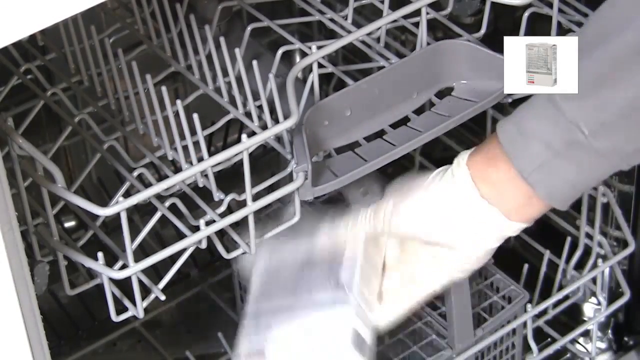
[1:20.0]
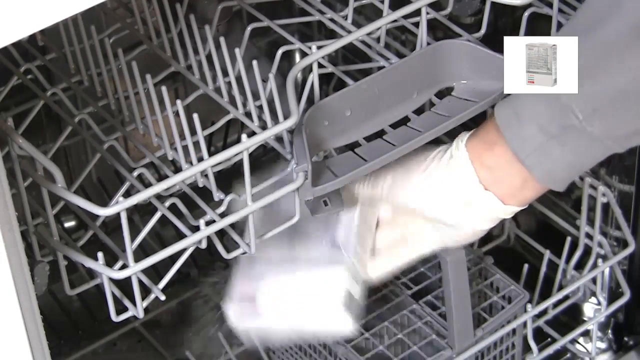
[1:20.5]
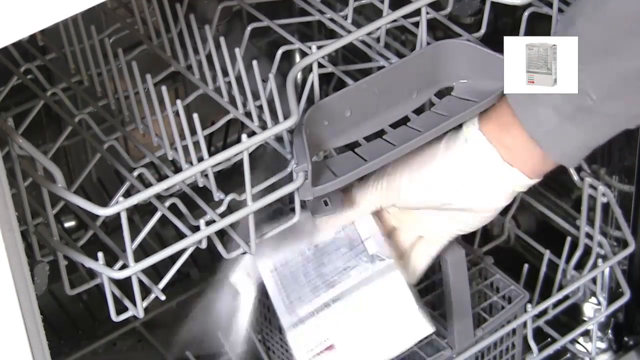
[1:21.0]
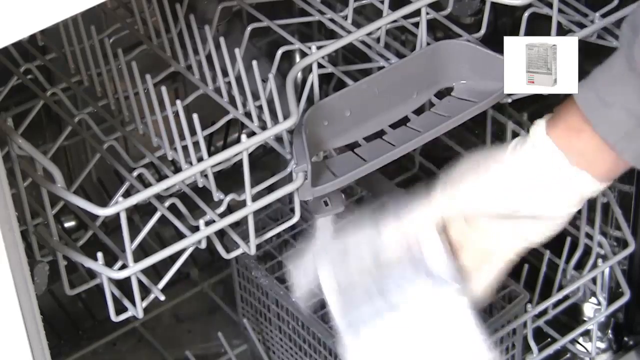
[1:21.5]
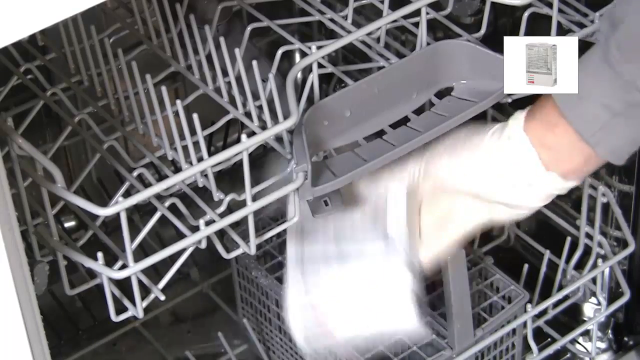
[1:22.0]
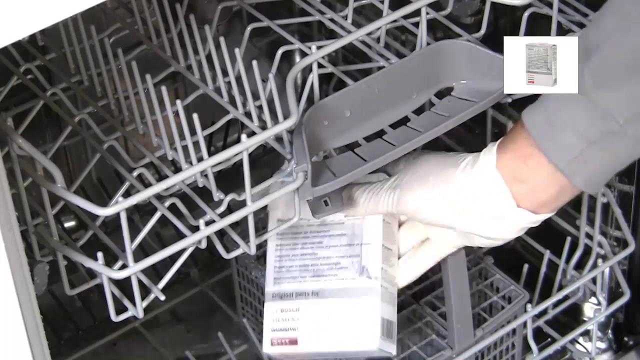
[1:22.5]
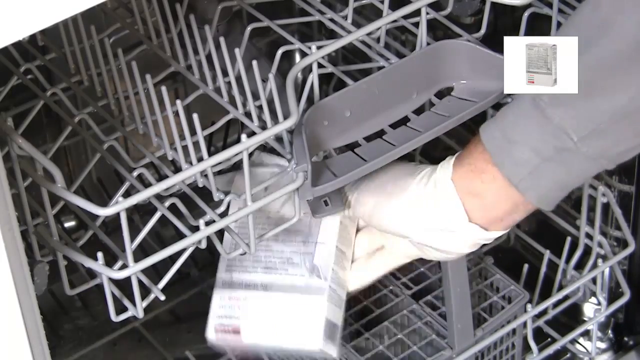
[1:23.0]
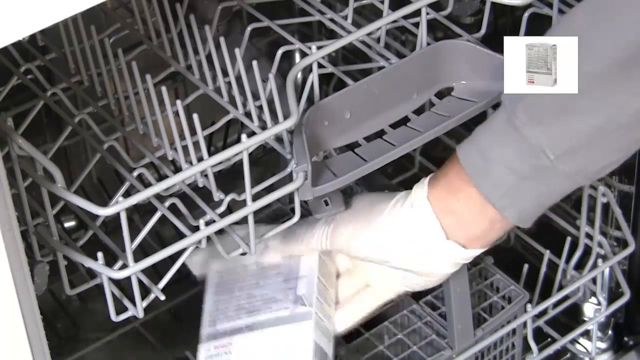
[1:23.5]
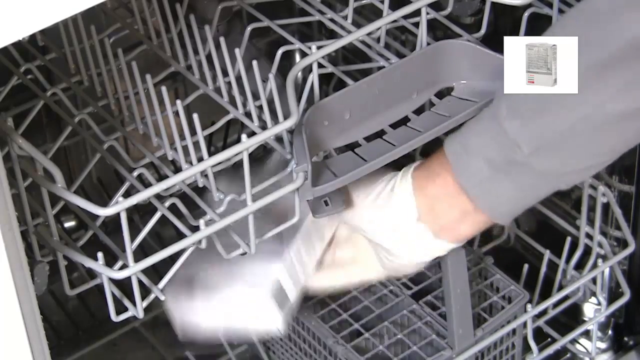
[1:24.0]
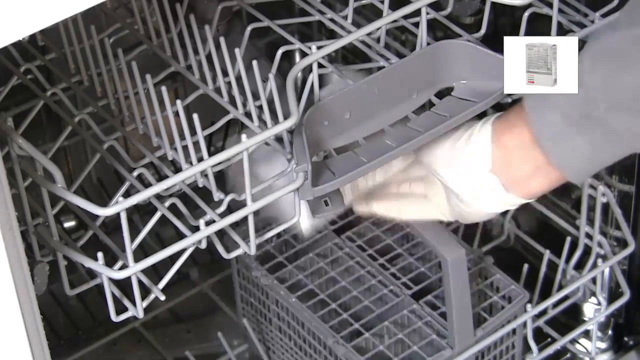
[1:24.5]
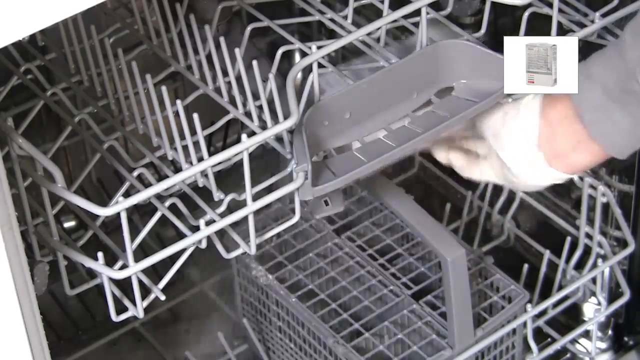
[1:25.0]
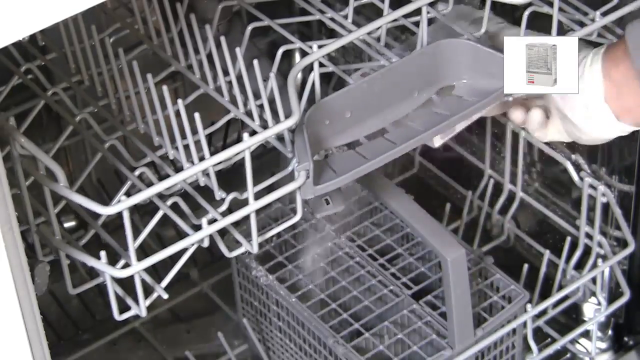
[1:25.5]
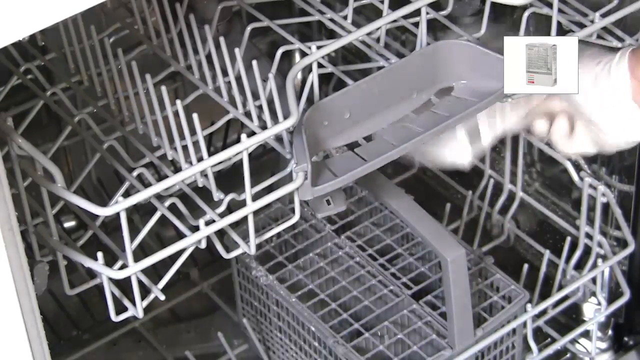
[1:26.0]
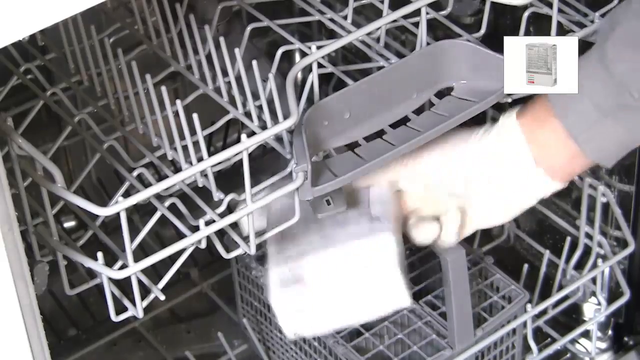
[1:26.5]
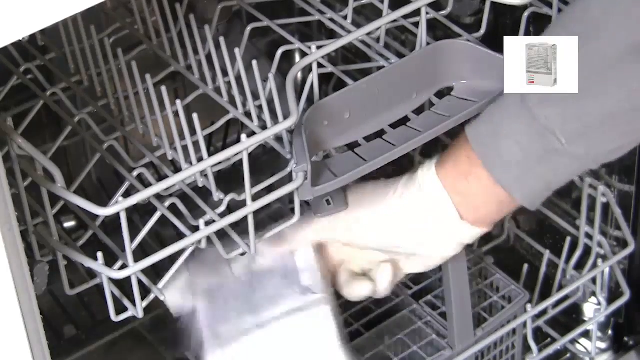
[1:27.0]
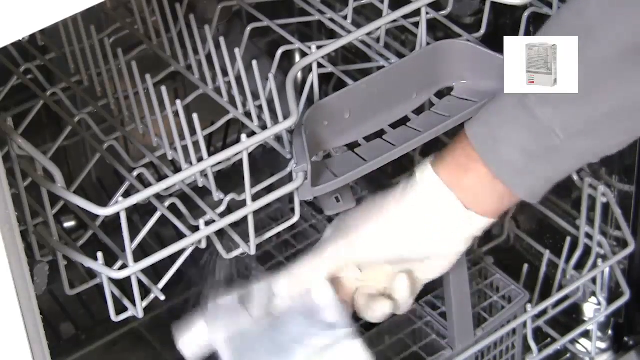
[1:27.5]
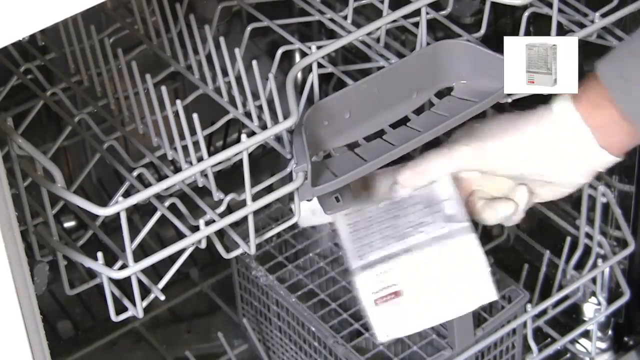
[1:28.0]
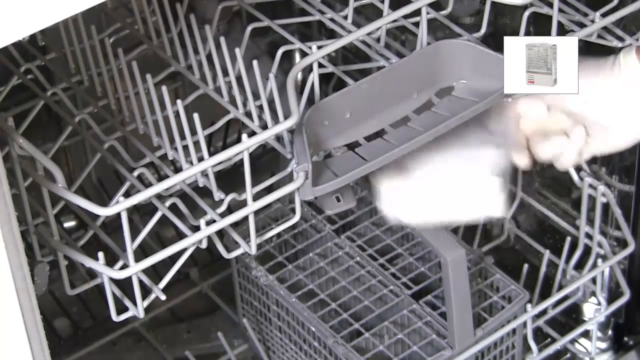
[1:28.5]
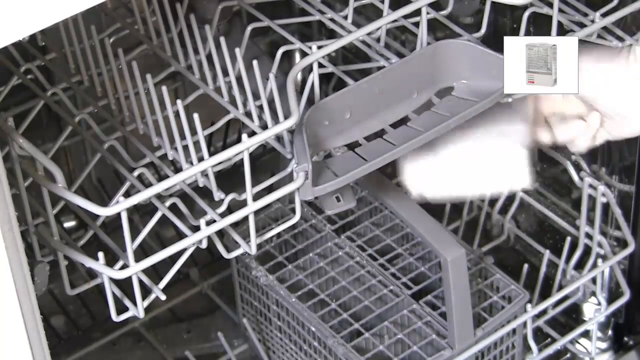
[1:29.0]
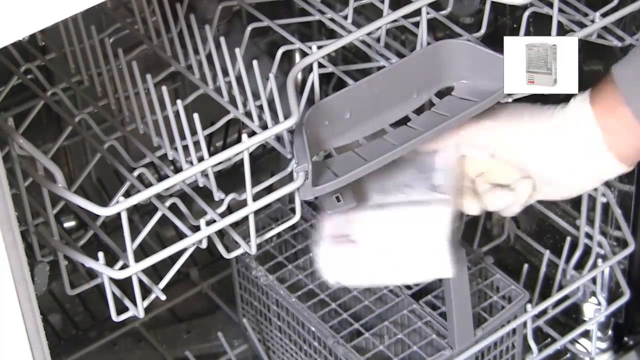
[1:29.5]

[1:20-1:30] The person shakes the contents of the box into the dishwasher, and the powder sprinkles everywhere inside, occasionally hitting the top rack, the bottom rack and the utensil basket. He spreads it all over the bottom so it falls inside the dishwasher, kind of emptying the whole box. There seems to be no organization or plan to the sprinkling; he just spreads it everywhere until the box is emptied.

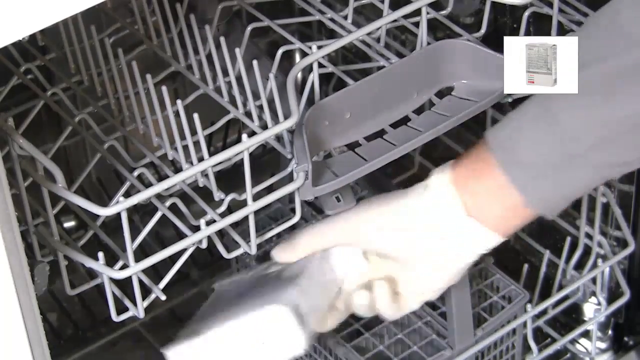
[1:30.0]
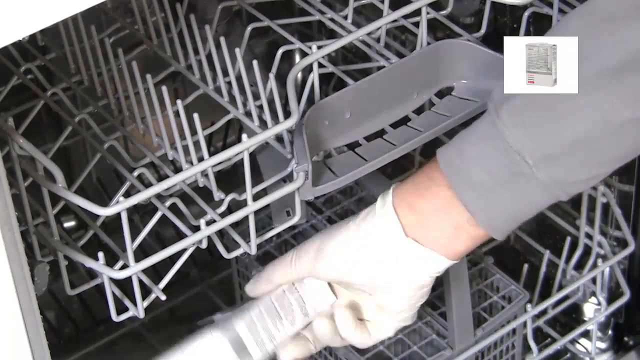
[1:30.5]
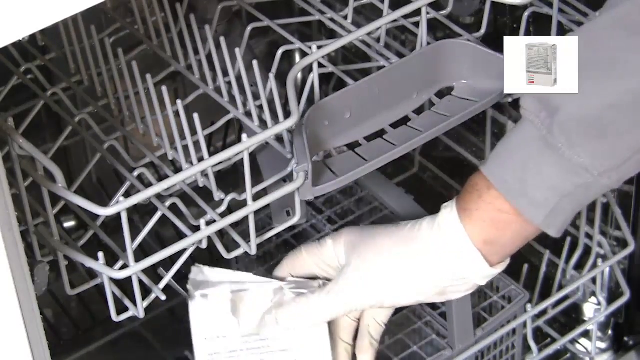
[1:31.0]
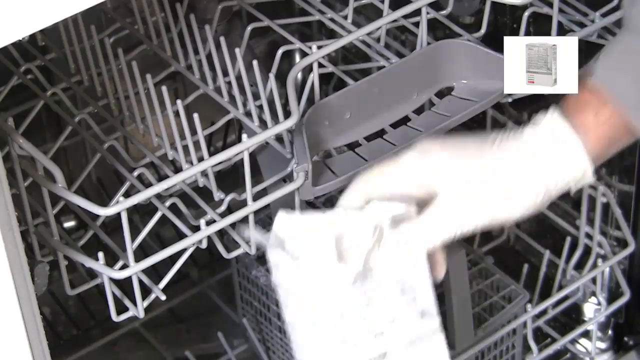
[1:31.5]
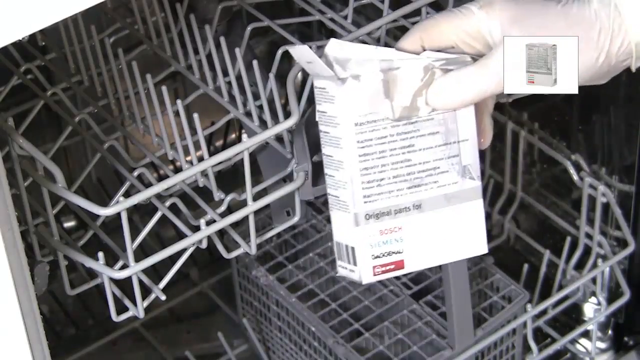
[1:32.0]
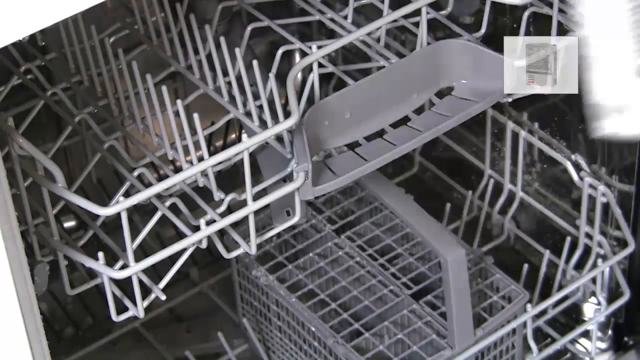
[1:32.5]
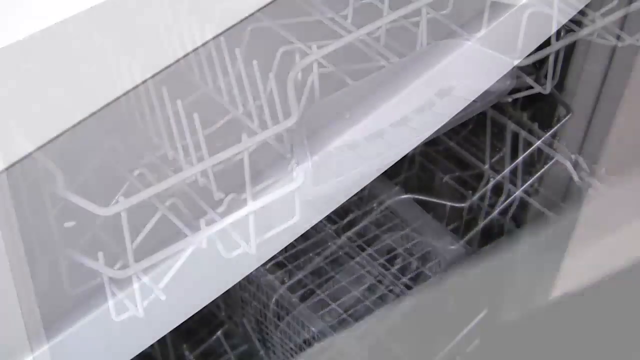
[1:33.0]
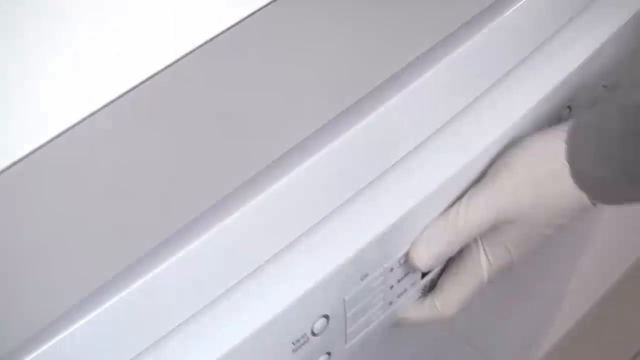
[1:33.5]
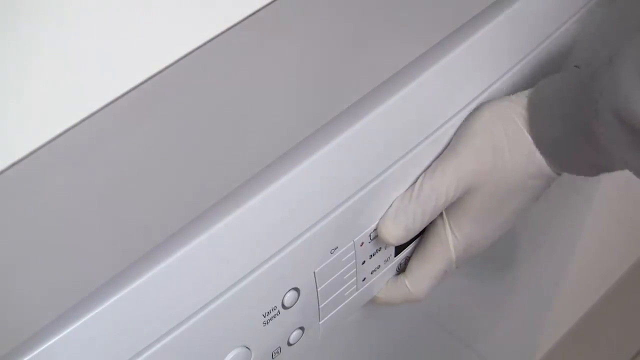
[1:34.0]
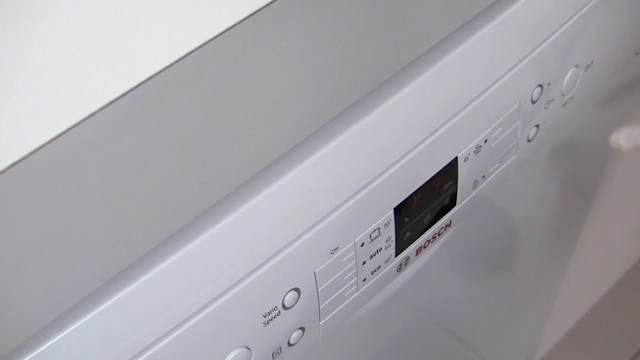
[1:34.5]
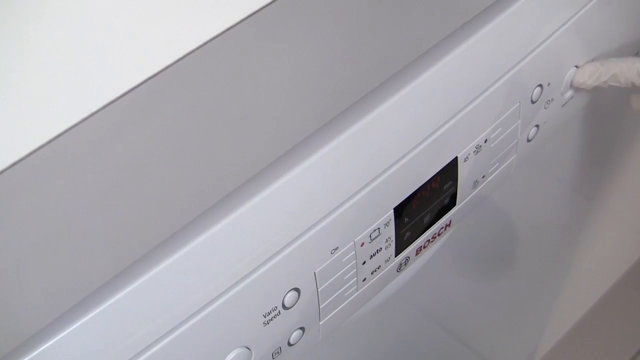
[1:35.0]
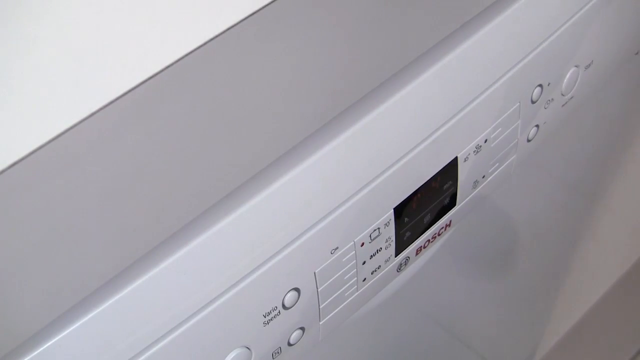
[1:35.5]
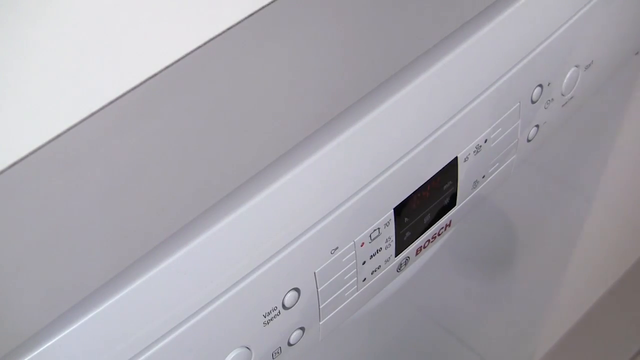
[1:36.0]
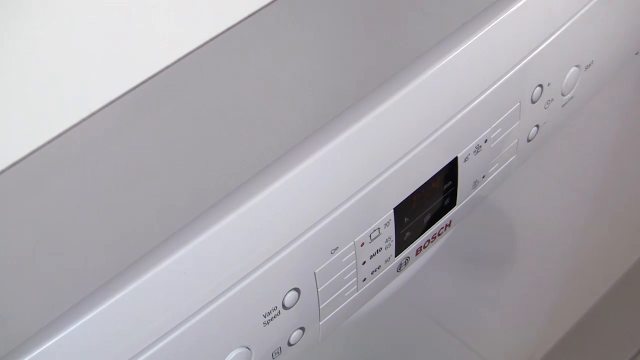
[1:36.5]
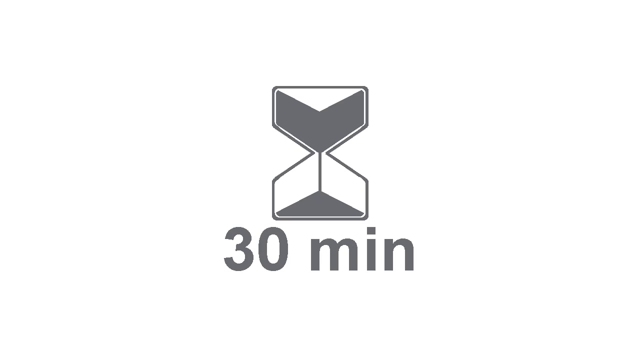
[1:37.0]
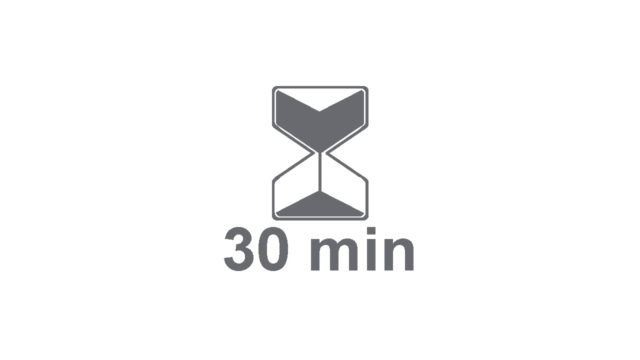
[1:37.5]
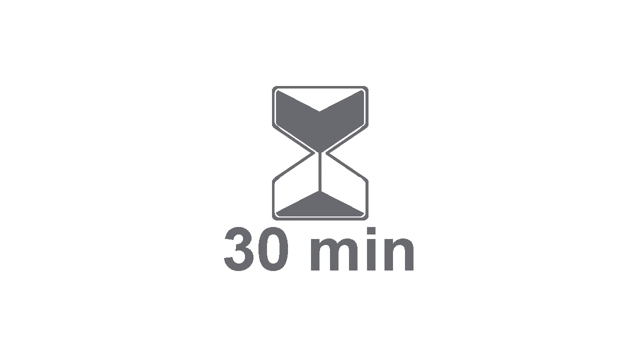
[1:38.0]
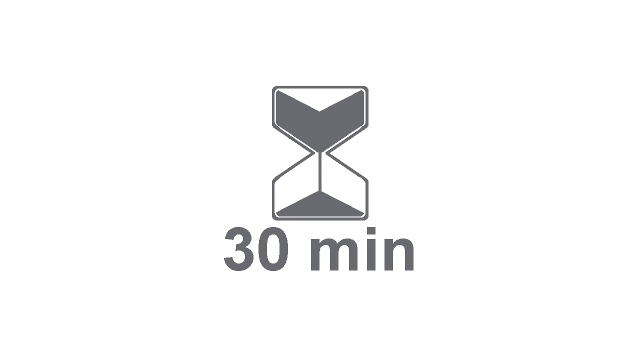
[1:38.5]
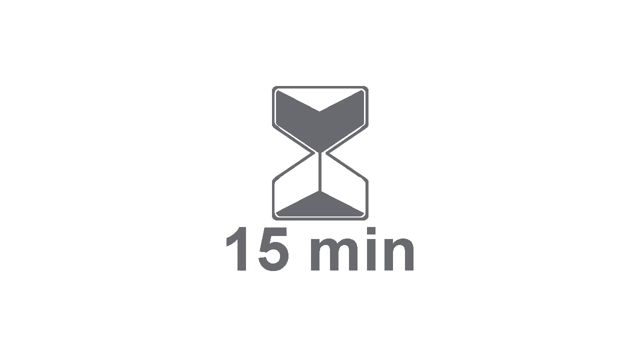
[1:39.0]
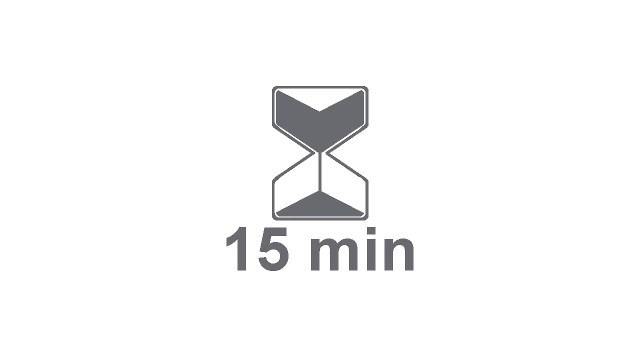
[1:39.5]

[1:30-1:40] The person shakes the box into the dishwasher, then shows the box in front of the camera and takes it away. They close the dishwasher and press the start button on the right side of the door. The animated hourglass display shows again: "30 minutes" appears with the hourglass full, then "15 minutes" with a bit in the bottom part, and the animation gradually shows the hourglass emptying to the bottom part again.